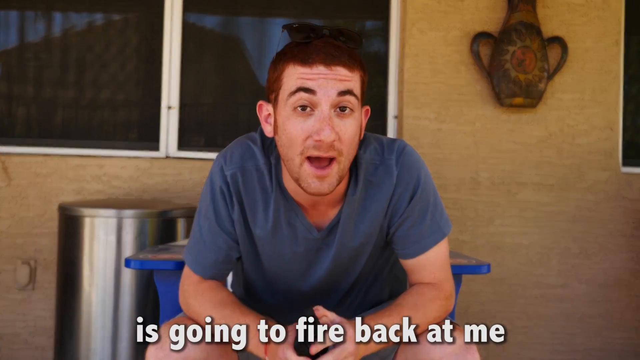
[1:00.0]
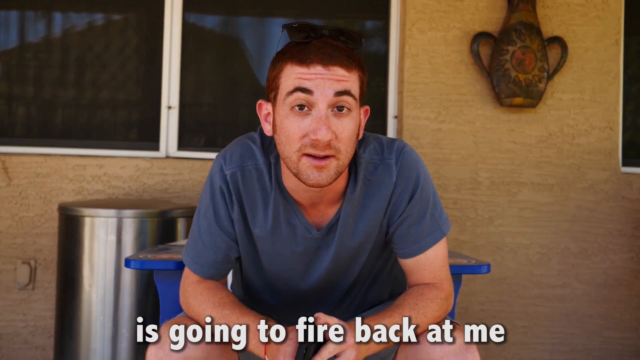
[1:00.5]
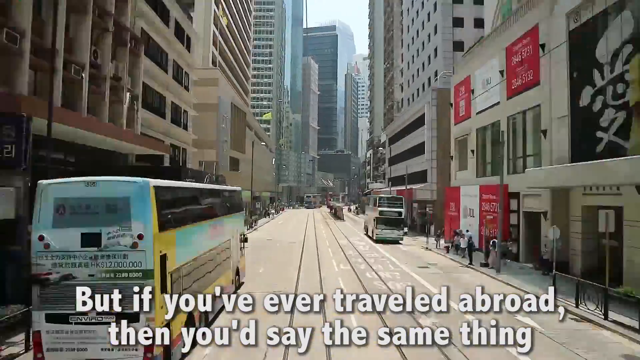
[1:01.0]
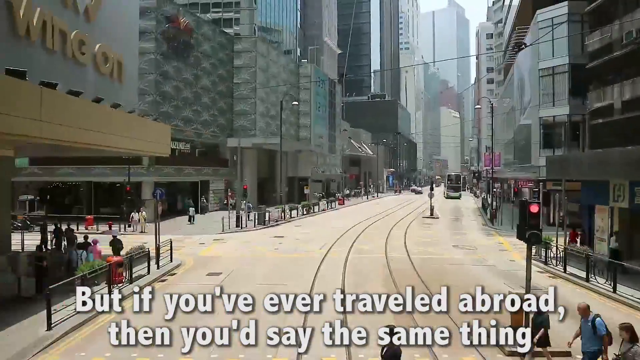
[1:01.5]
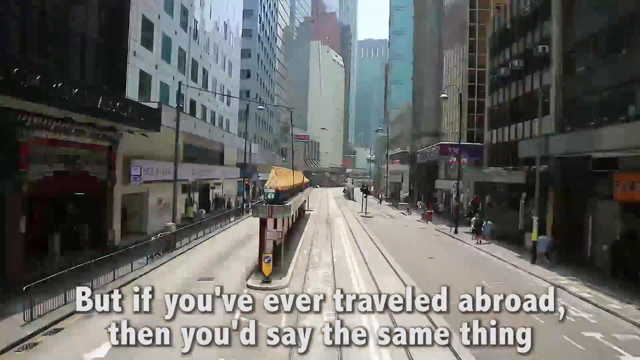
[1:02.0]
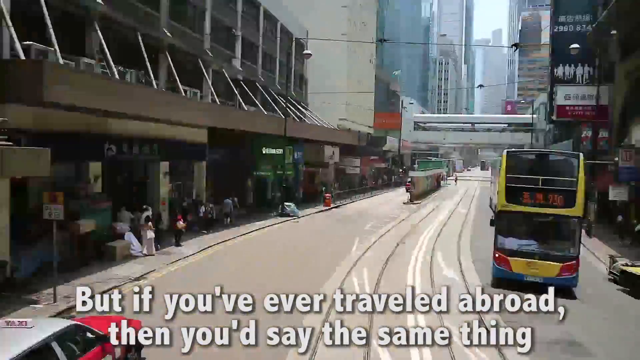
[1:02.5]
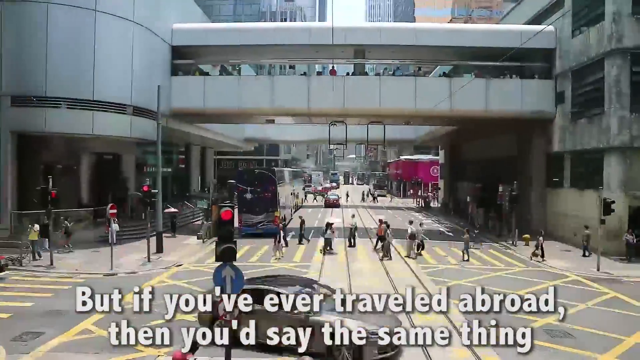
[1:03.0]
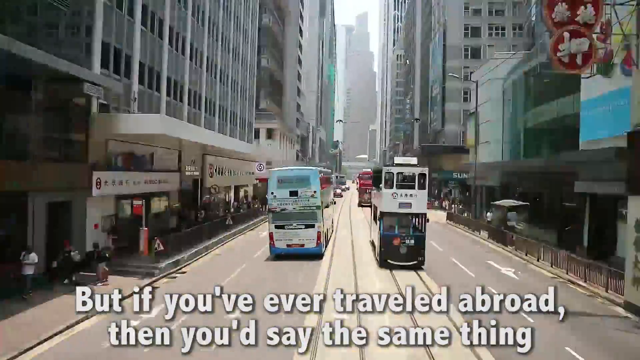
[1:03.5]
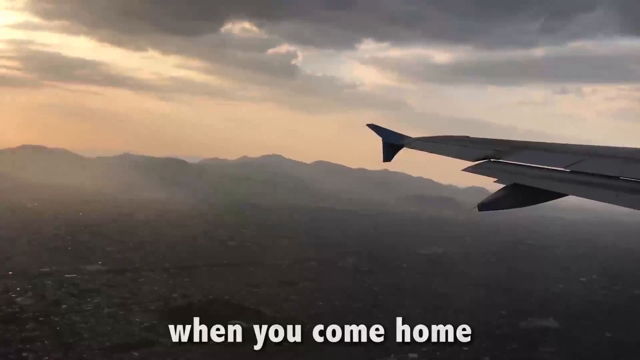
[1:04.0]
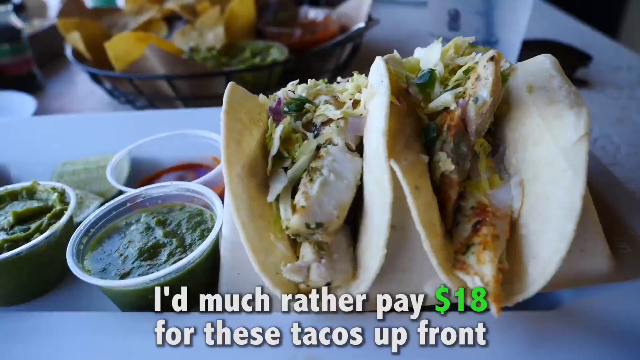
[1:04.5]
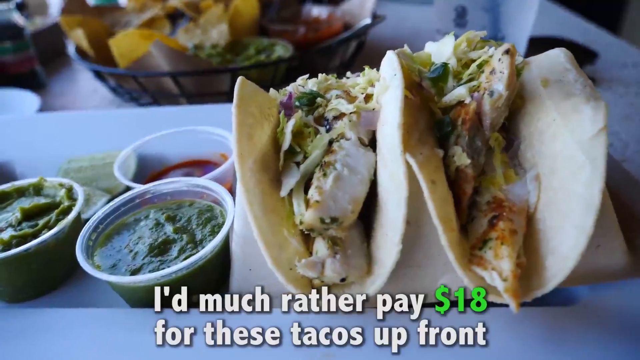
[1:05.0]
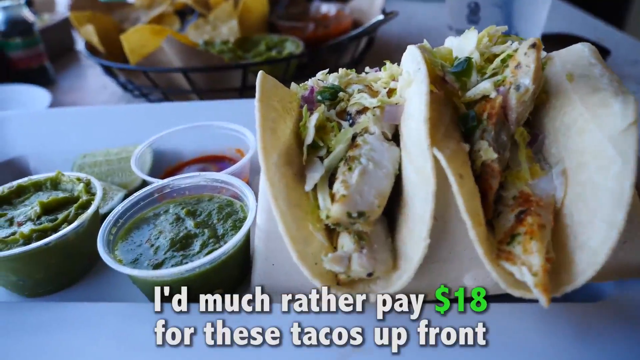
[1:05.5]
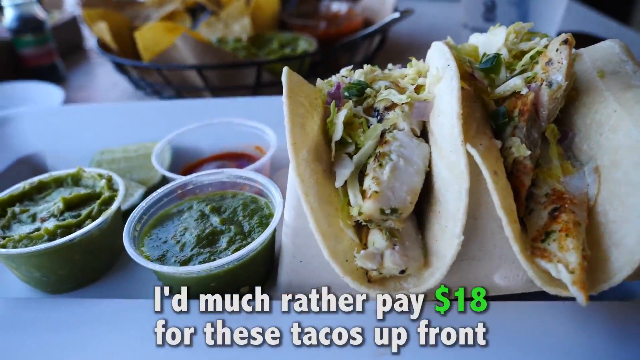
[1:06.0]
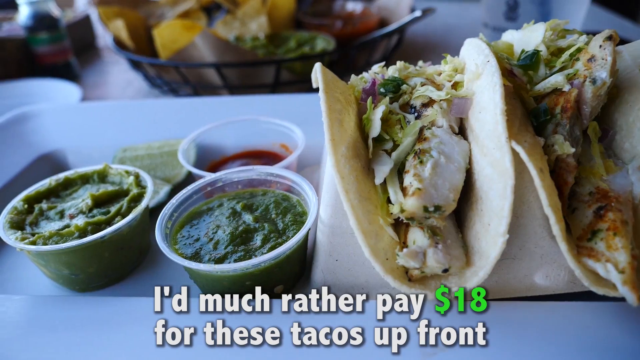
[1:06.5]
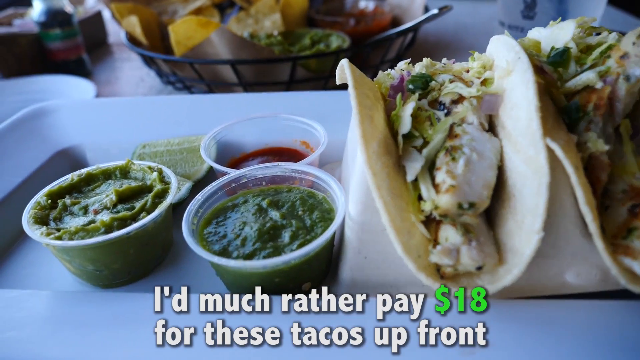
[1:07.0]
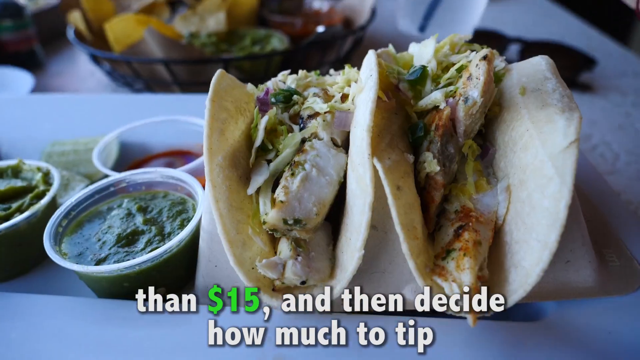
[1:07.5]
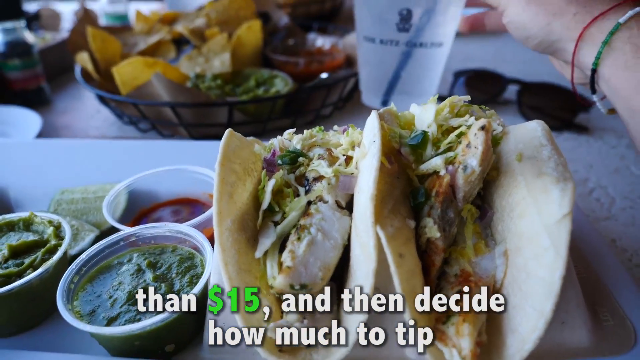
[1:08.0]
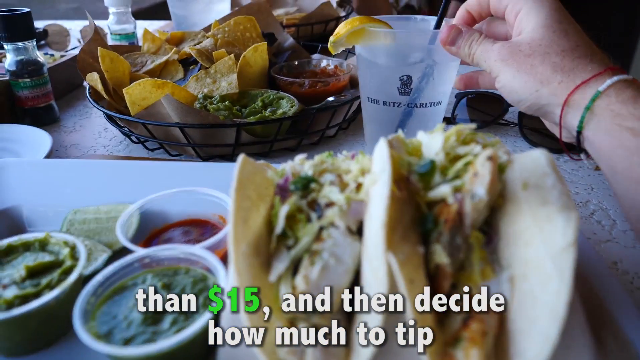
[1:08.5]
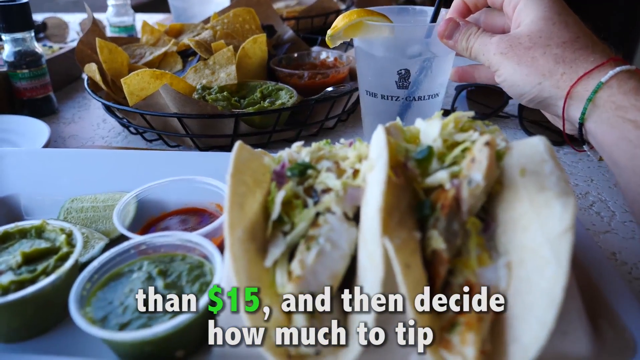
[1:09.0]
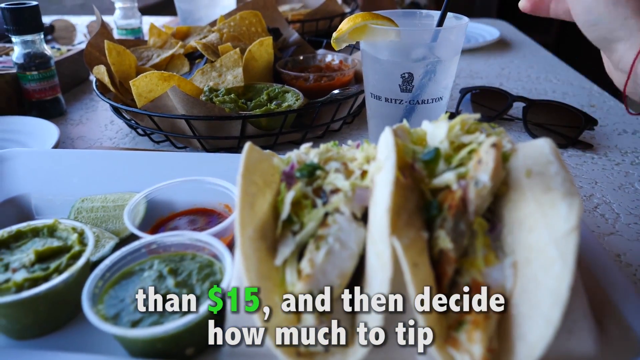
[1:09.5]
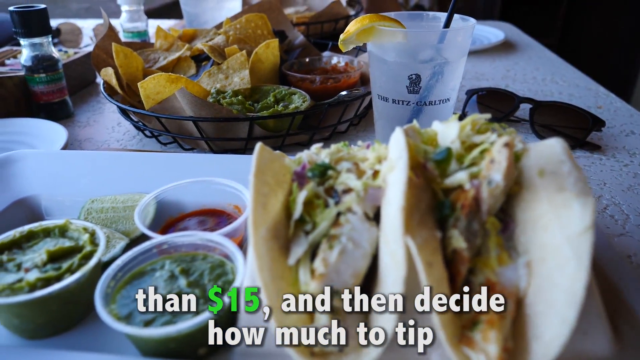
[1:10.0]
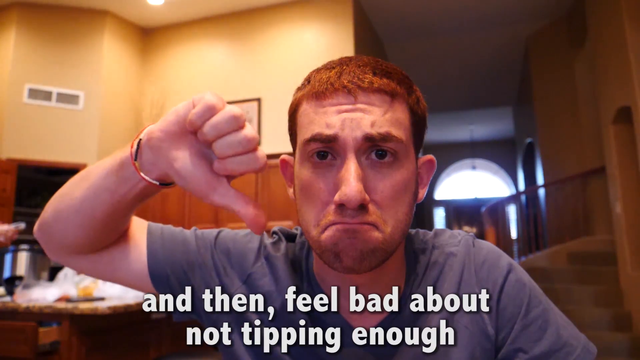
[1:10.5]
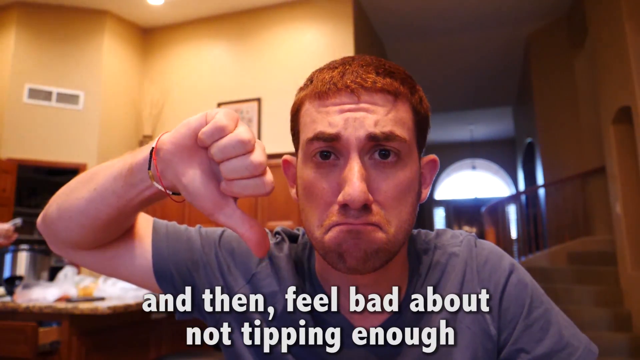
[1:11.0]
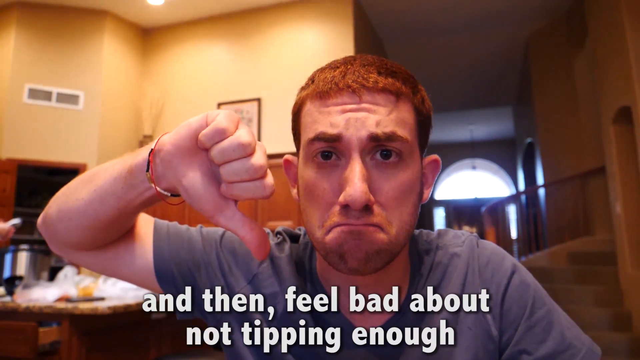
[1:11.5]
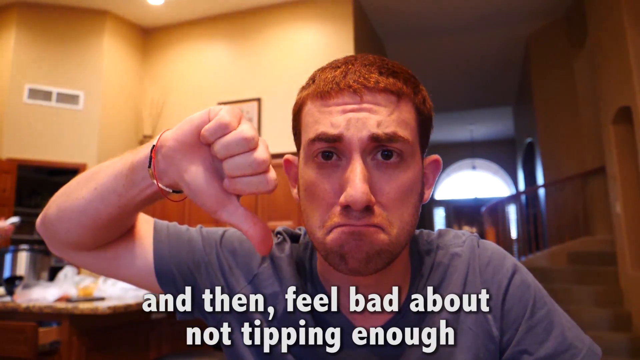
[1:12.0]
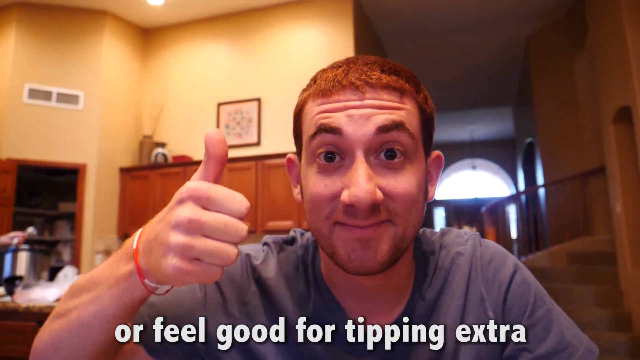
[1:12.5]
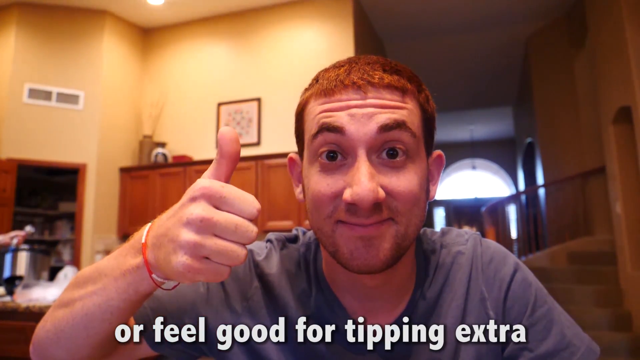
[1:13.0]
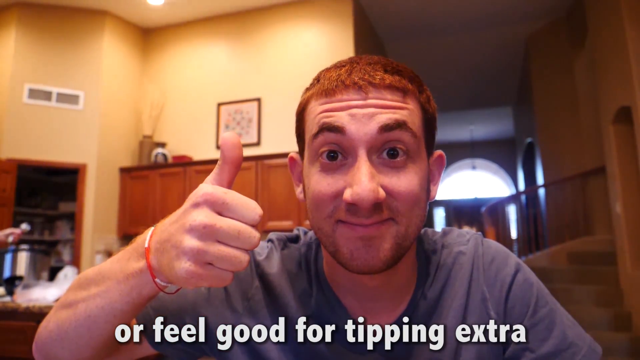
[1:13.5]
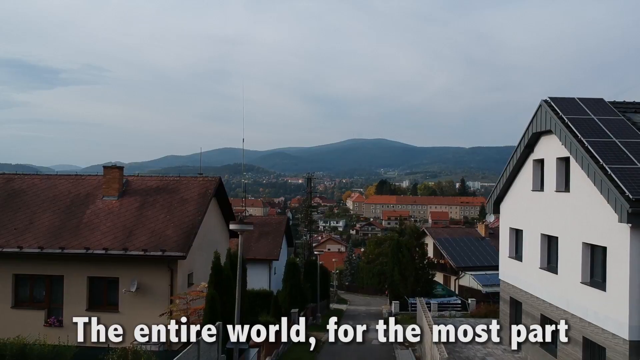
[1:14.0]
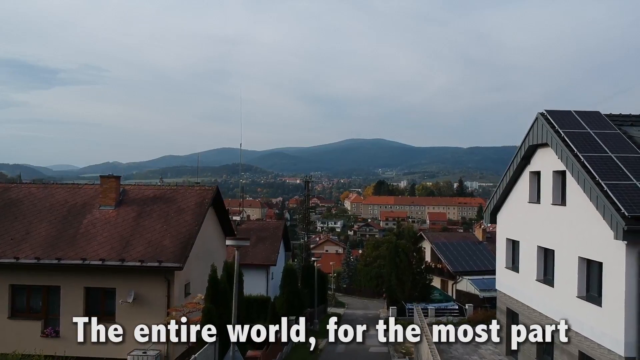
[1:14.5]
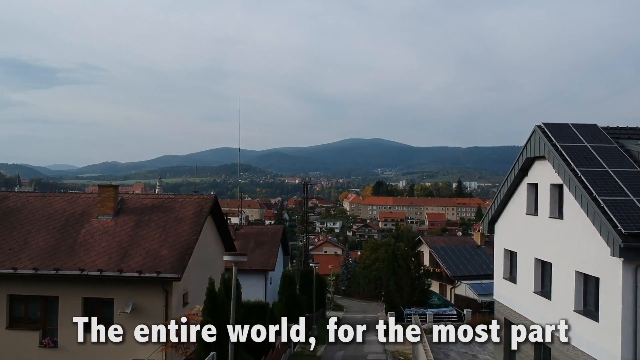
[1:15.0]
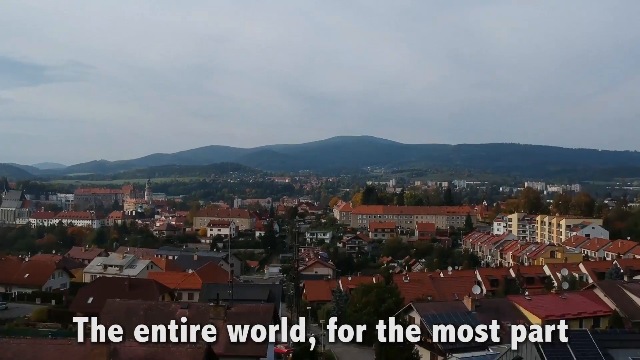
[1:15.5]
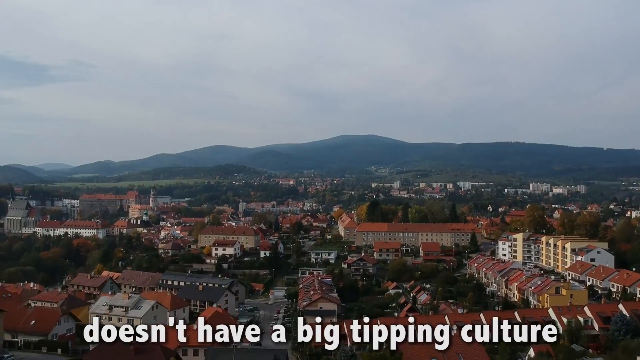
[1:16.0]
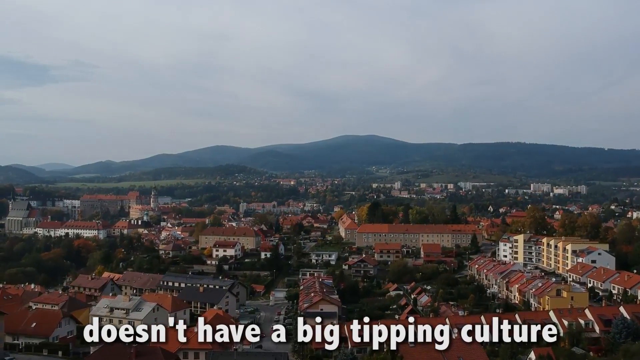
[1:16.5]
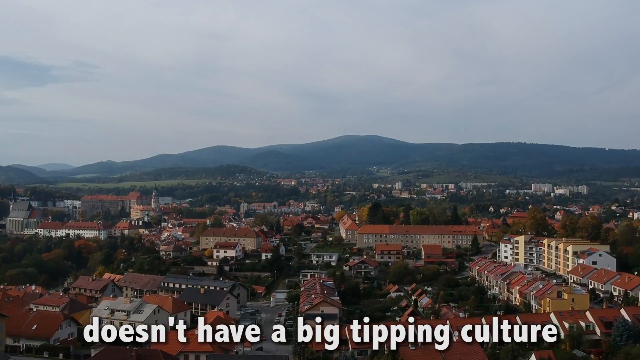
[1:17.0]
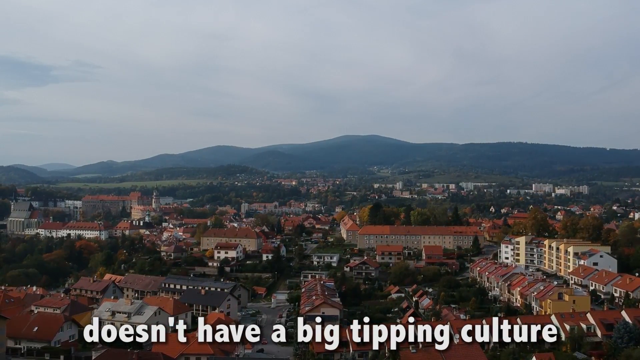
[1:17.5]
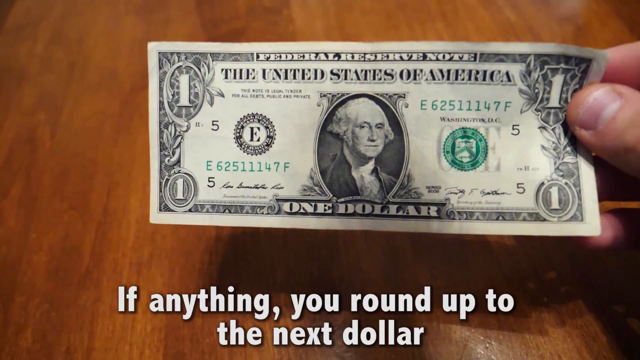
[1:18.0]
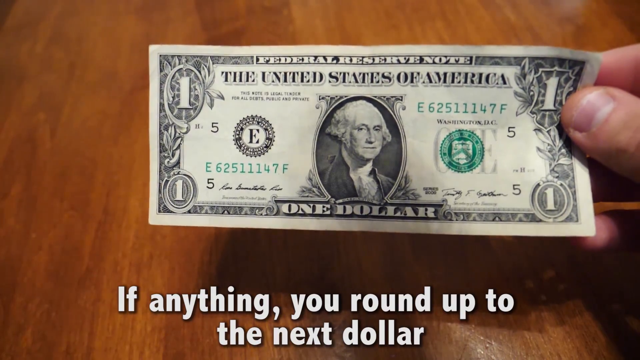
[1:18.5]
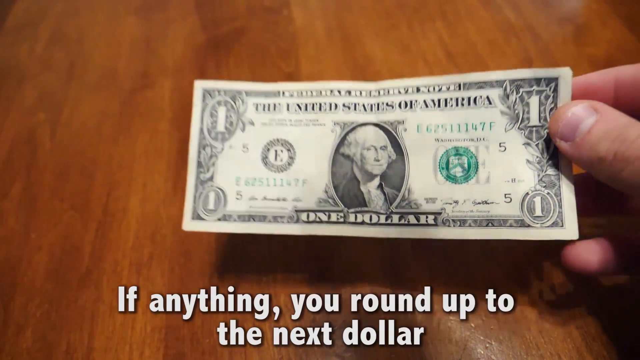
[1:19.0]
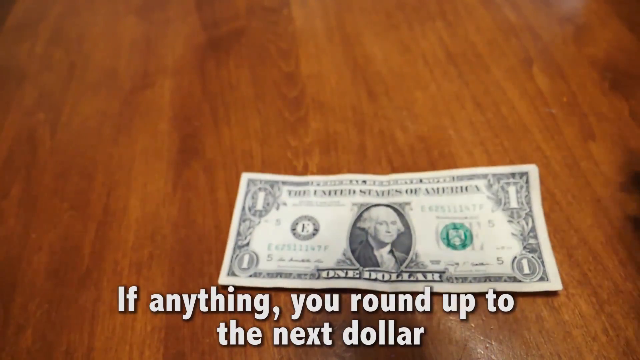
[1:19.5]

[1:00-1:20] A zoomed-out photo looks slightly overhead over a street. The street is light gray and the sky appears to be the same color. There are tracks on the ground and traffic going in each direction, most notably a lot of buses going away toward the top of the screen. It zooms out and shows a rapid, fast-forwarded view of what is likely a recording of the street. Next, a plane flies in the air and the view looks out of the plane window as it flies, apparently traveling to another area. Then a table has a large white plate with what appear to be two soft tacos with a lot of filling. A few plastic containers on the table hold a green liquid or dipping sauce and a red one, possibly salsa and guac, and there is a lime on the table; the man places a cup on the table that appears to be water with lemons in it. He seems to be eating at a Mexican-themed restaurant, and in the background there appears to be a bowl of chips. The man then sits at a restaurant looking at the camera, giving a thumbs down and then a thumbs up. It pans out to overlook a city with many shingle-like orange roofs, which almost looks like it could be in Mexico or another Hispanic country. Finally, at a wooden table, the man holds a dollar bill and then drops it on the table.